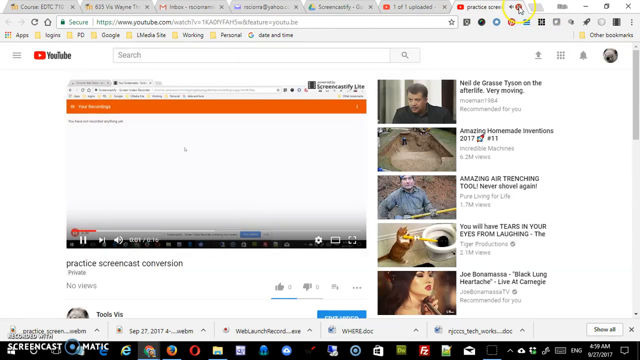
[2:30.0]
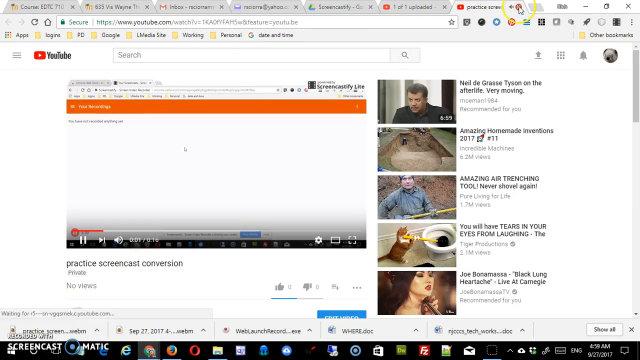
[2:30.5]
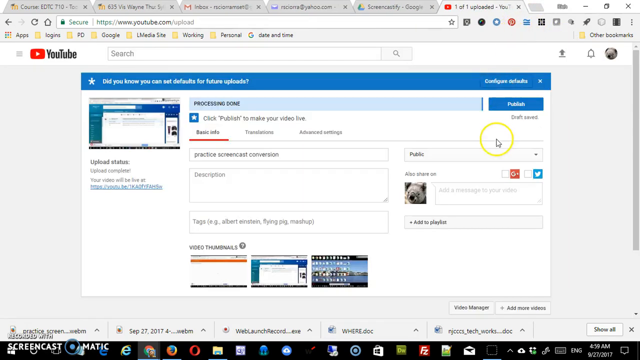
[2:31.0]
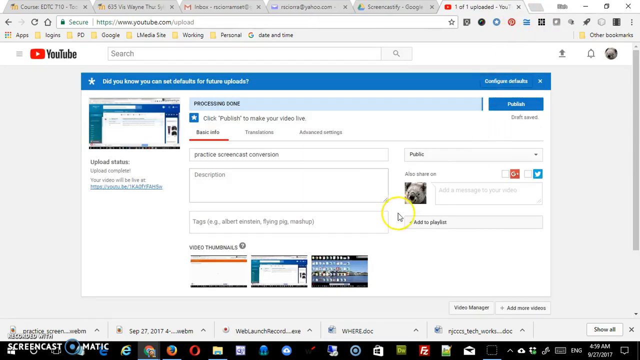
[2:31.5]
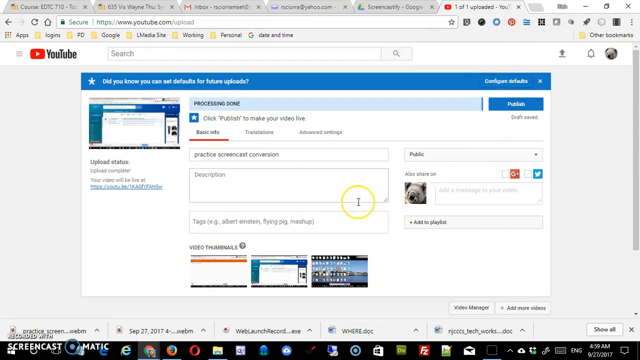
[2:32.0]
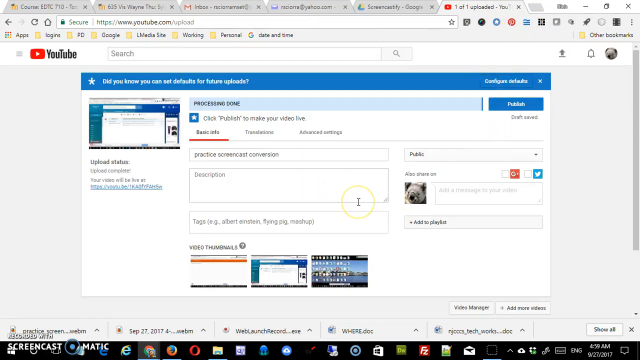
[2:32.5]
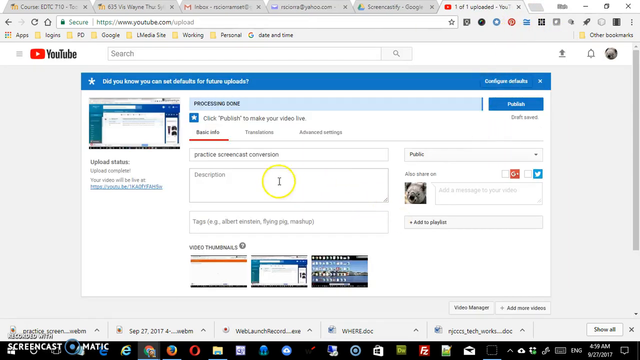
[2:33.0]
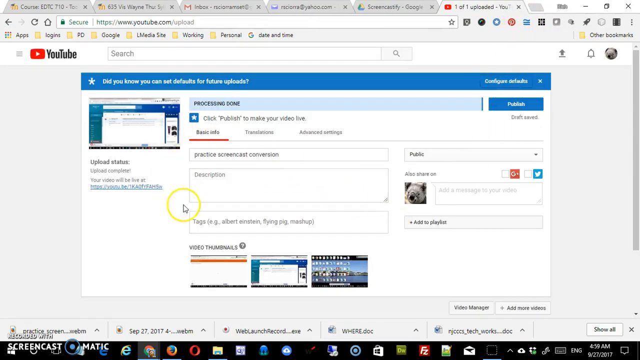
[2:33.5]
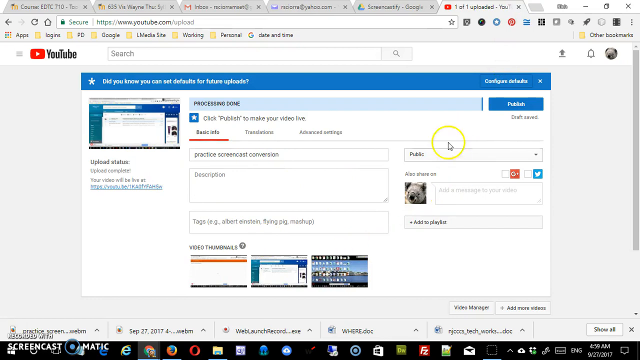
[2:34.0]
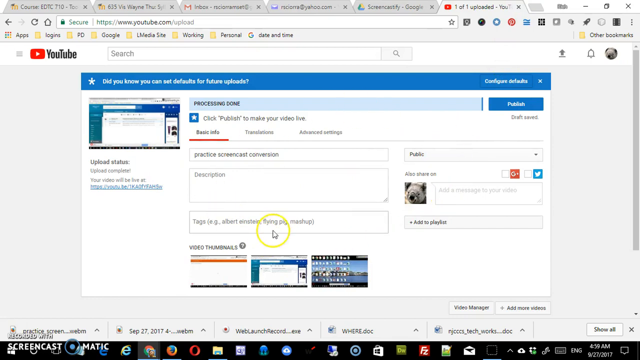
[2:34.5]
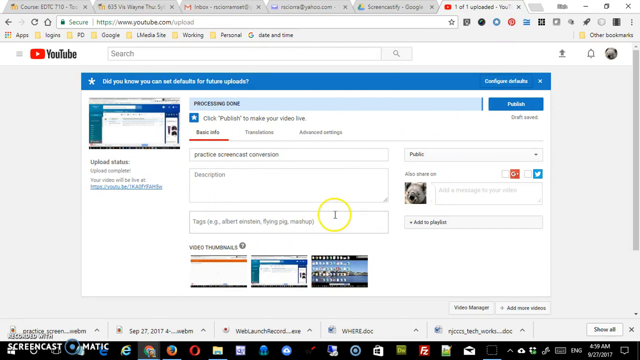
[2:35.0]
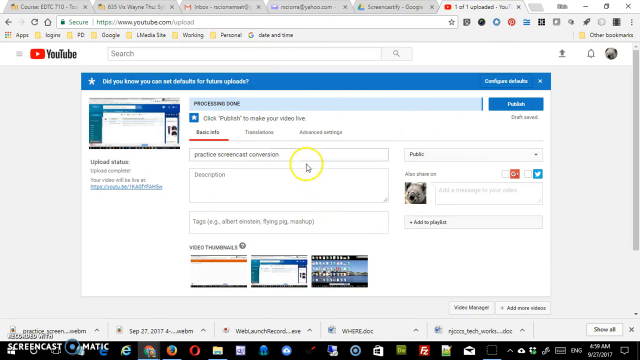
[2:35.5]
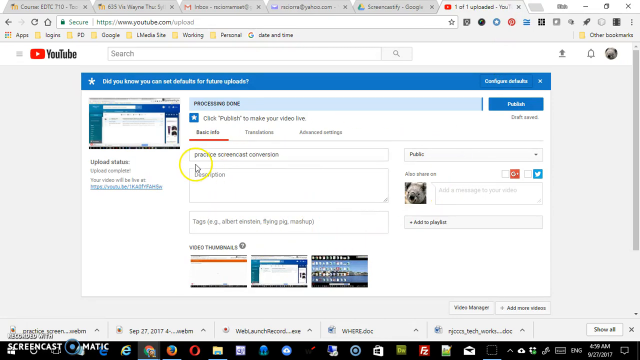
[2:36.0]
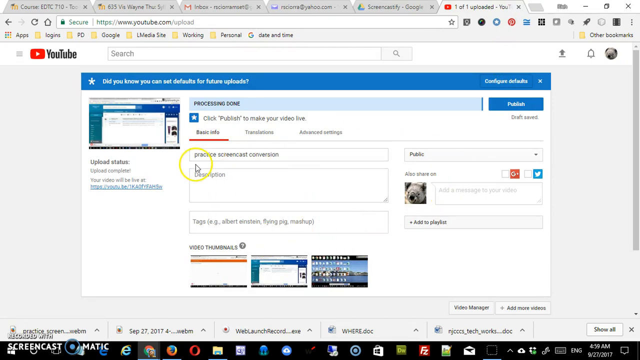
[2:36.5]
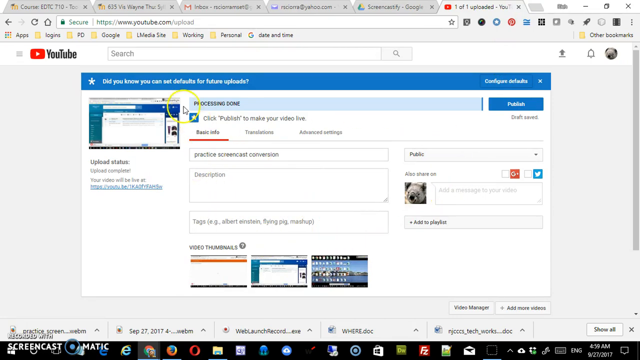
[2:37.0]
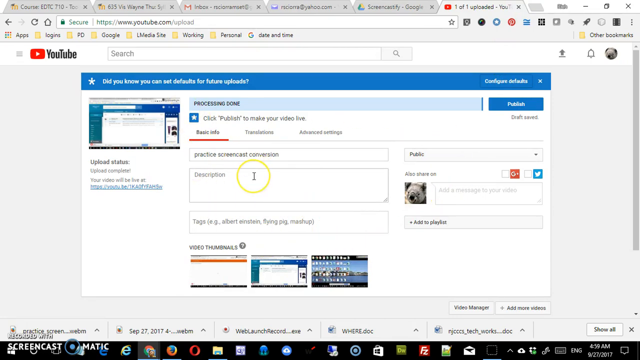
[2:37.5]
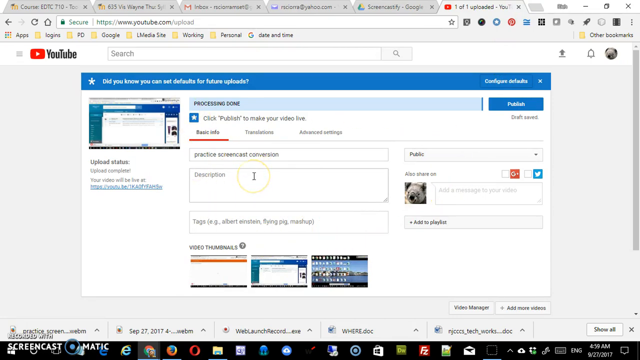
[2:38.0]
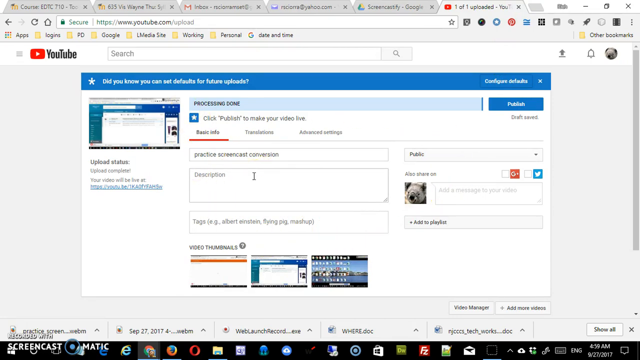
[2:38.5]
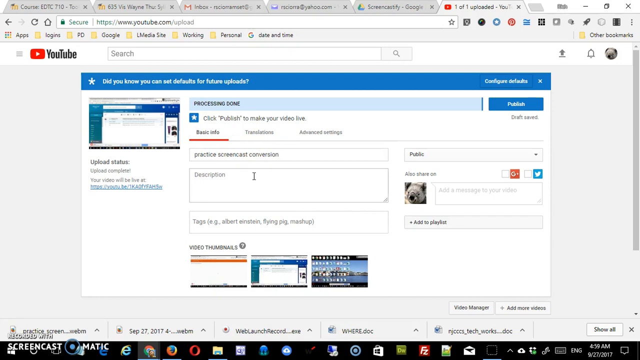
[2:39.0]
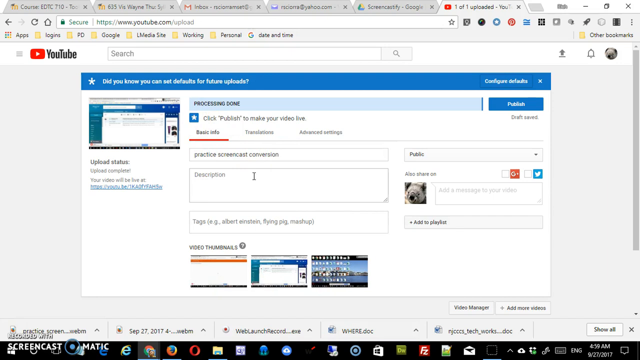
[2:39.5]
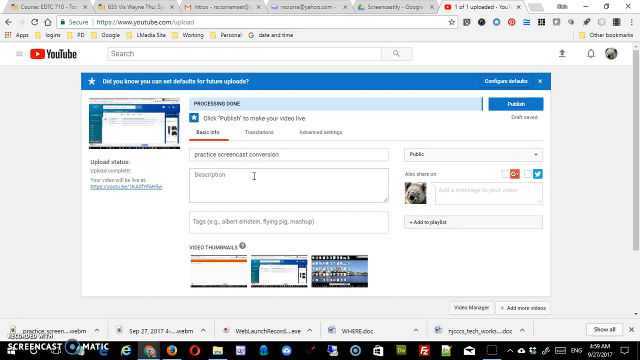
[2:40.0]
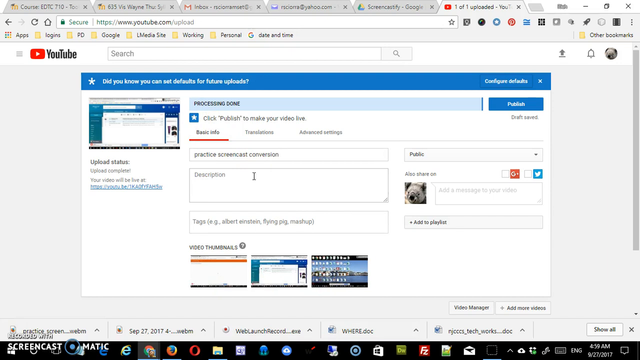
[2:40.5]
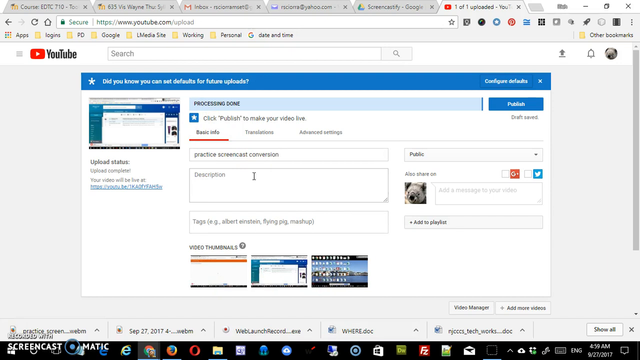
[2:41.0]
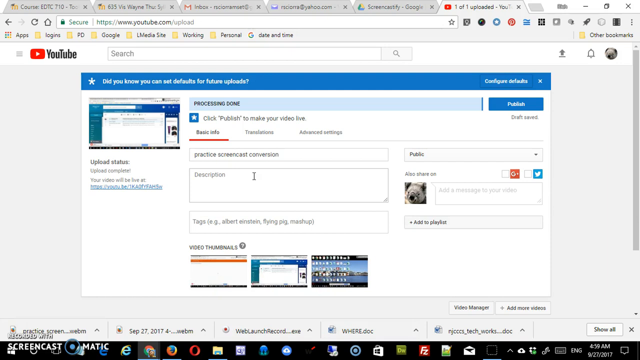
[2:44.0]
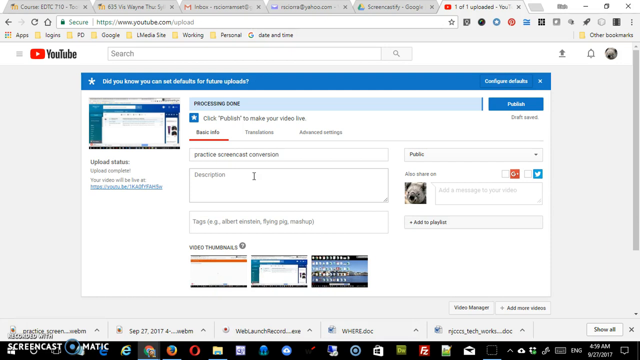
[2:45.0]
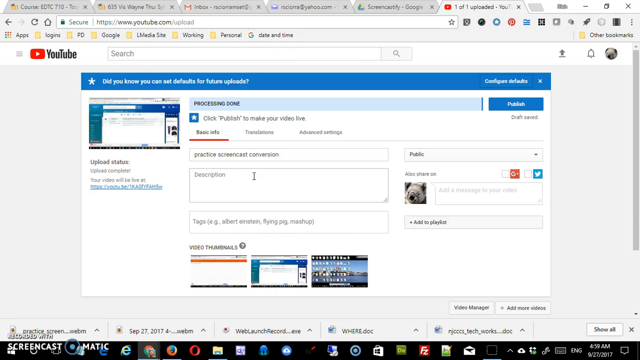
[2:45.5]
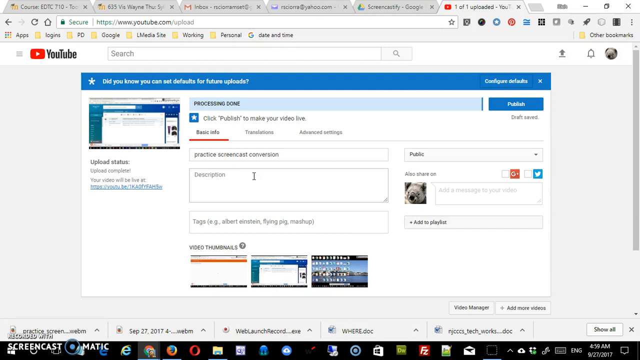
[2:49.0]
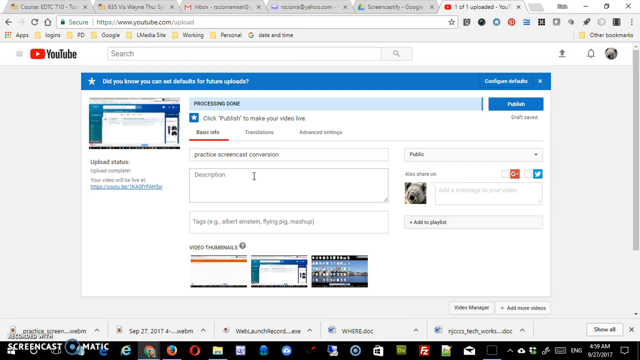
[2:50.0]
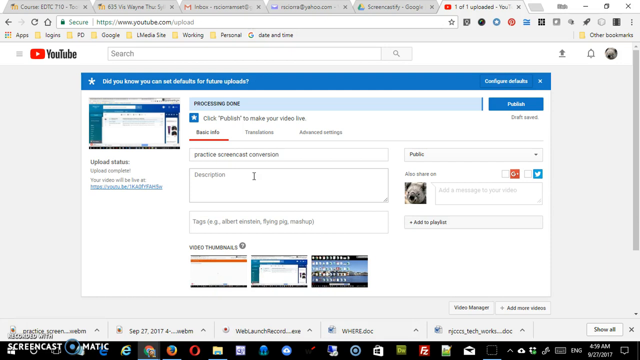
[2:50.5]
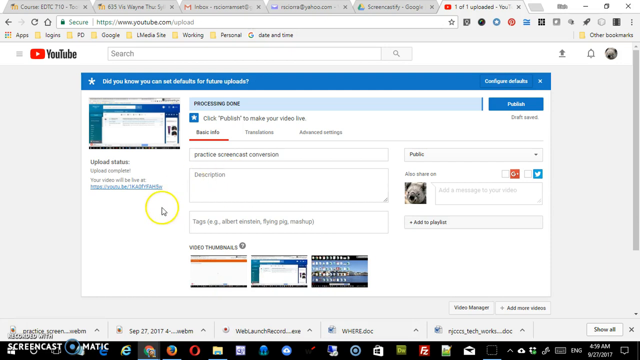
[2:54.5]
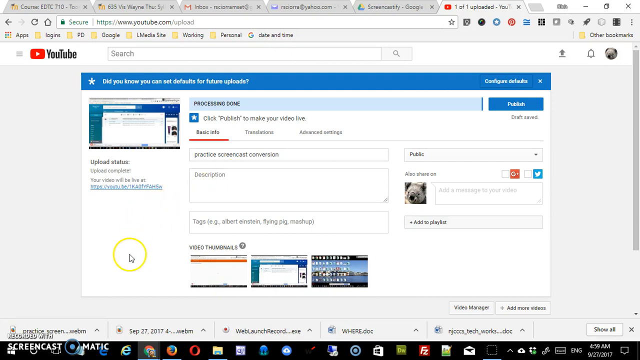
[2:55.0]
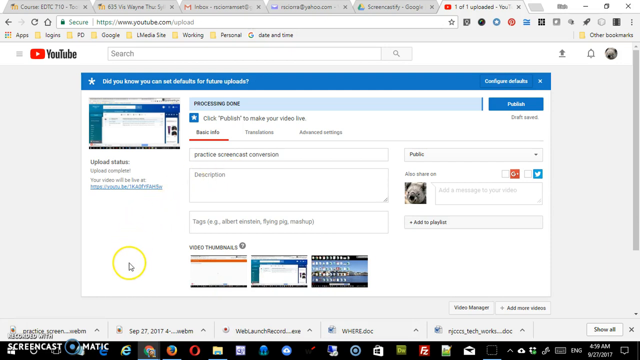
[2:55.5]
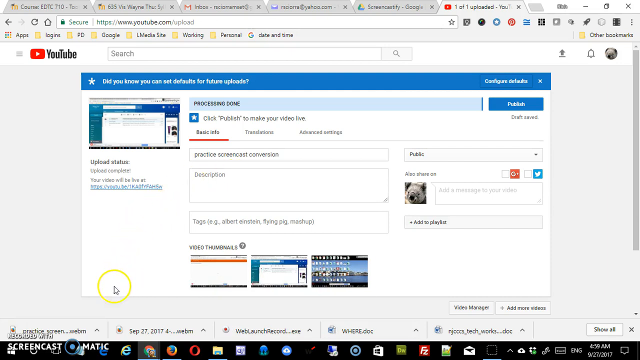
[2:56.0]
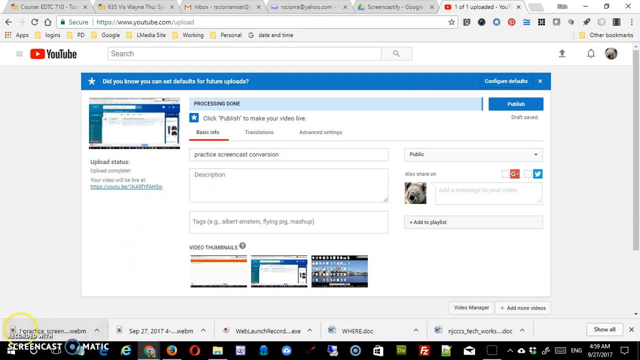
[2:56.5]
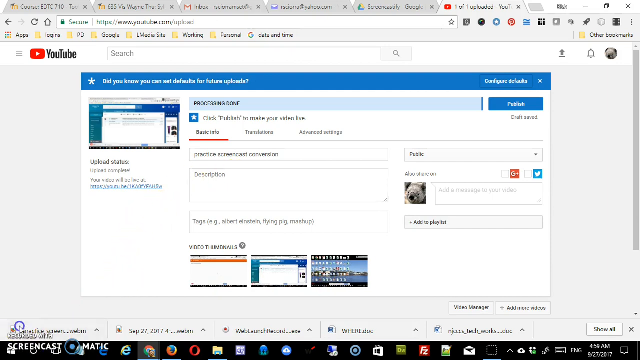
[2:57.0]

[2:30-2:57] A desktop shows a window with six tabs open; the last tab says "YouTube". Someone's YouTube account is on screen, and the mouse moves around highlighting different sections of the page, showing step by step how to upload a video to the account. Once that is done, the view switches to another YouTube screen showing where to check the account for the video after it is posted.